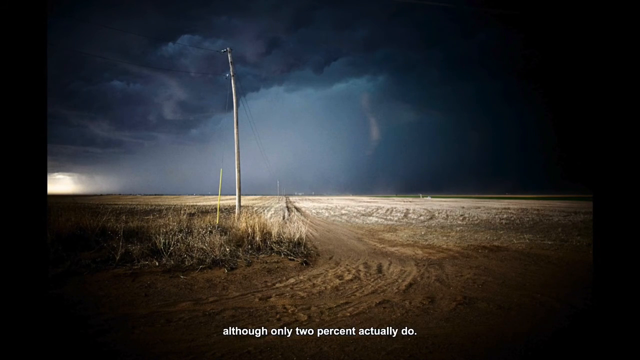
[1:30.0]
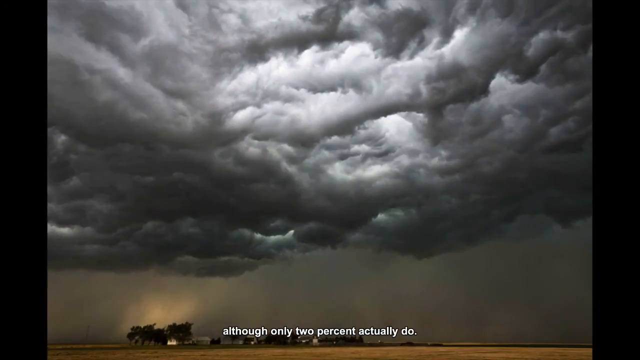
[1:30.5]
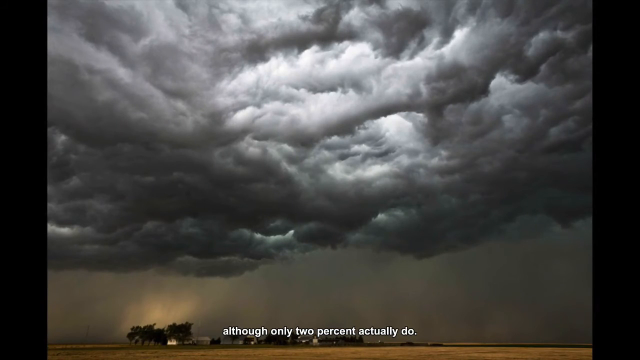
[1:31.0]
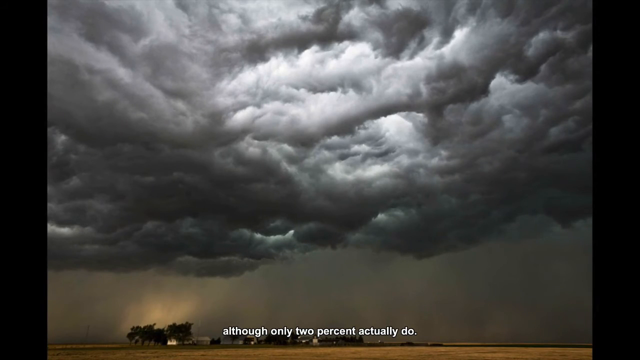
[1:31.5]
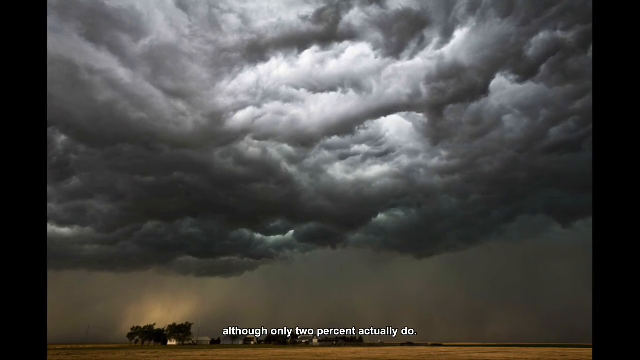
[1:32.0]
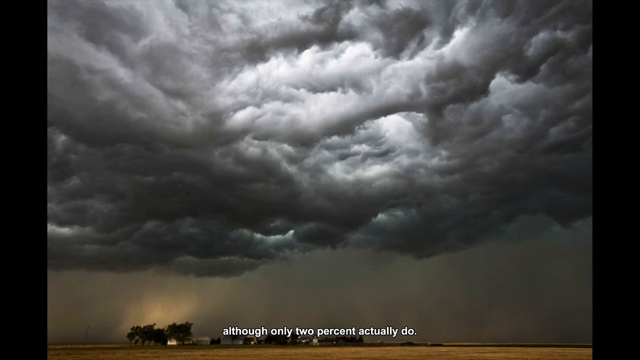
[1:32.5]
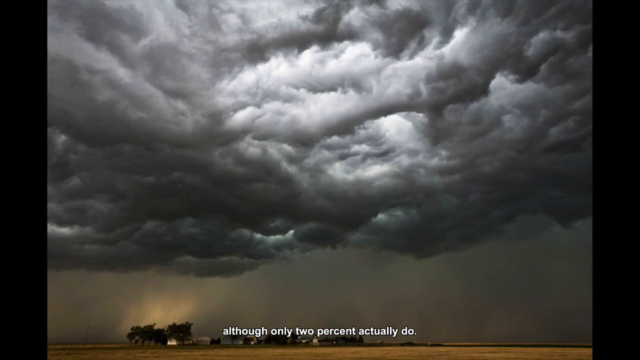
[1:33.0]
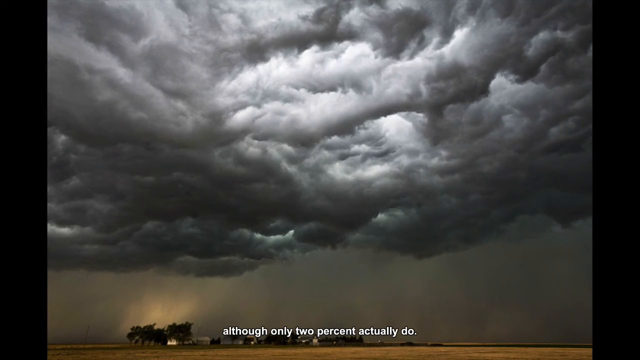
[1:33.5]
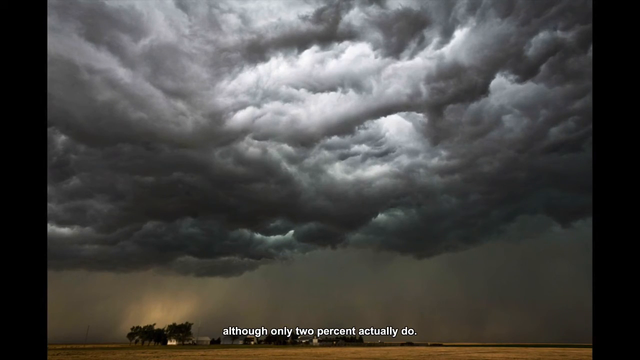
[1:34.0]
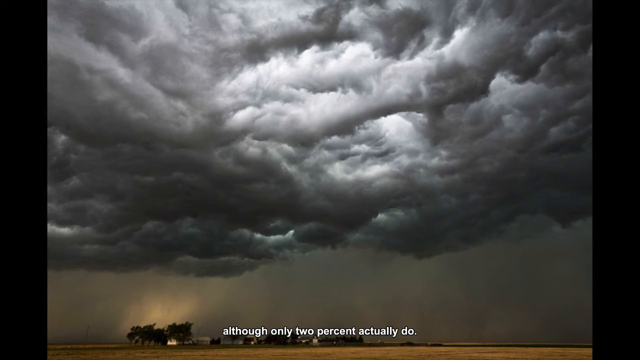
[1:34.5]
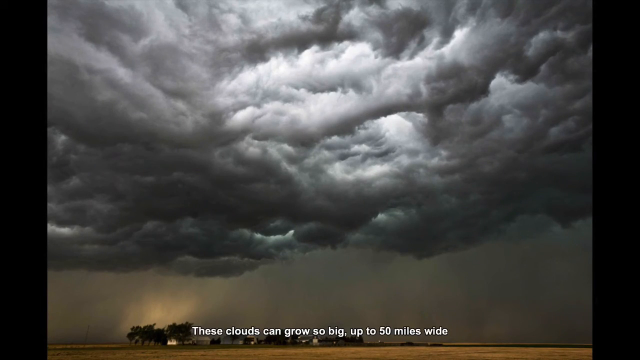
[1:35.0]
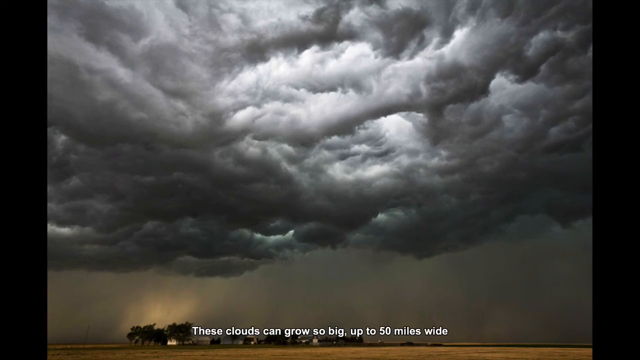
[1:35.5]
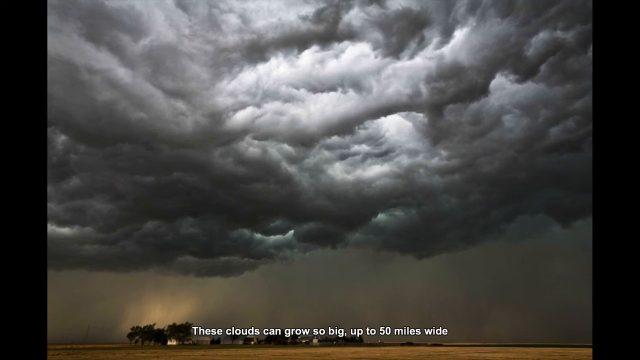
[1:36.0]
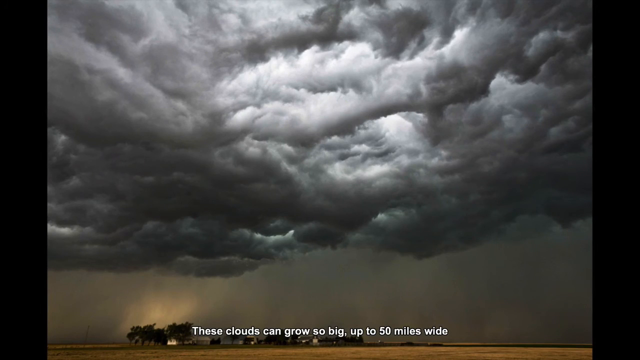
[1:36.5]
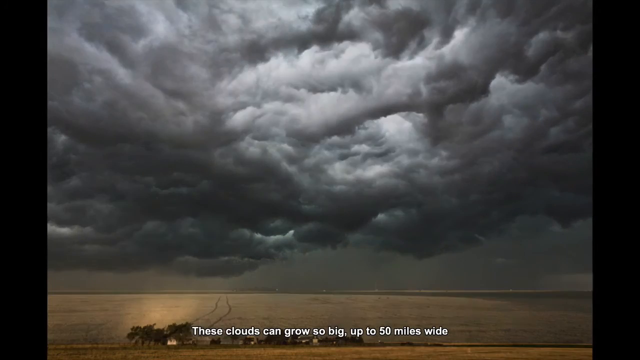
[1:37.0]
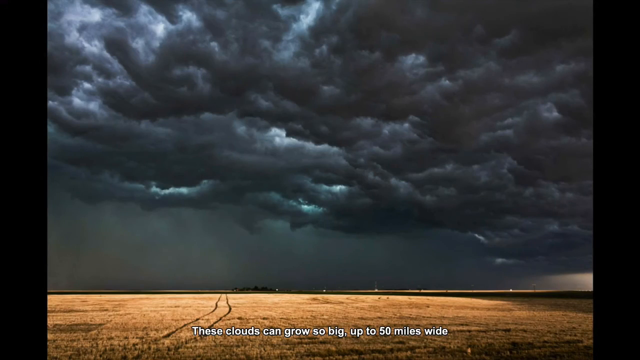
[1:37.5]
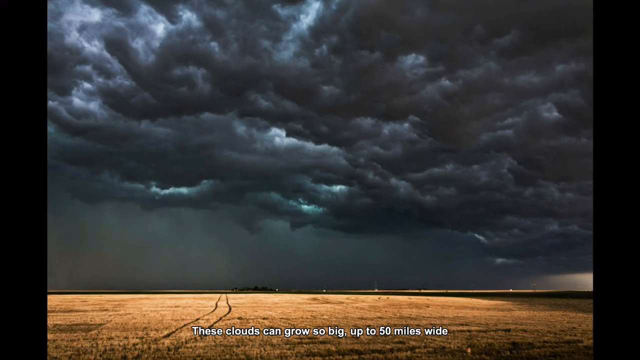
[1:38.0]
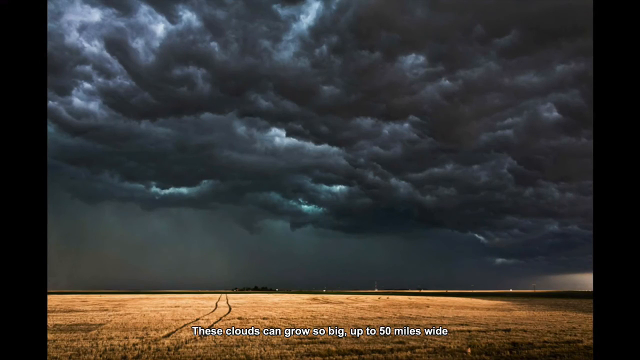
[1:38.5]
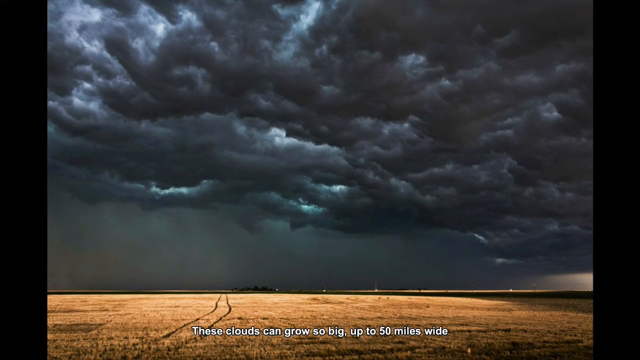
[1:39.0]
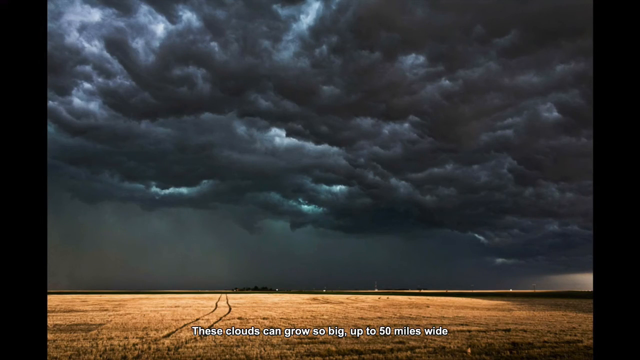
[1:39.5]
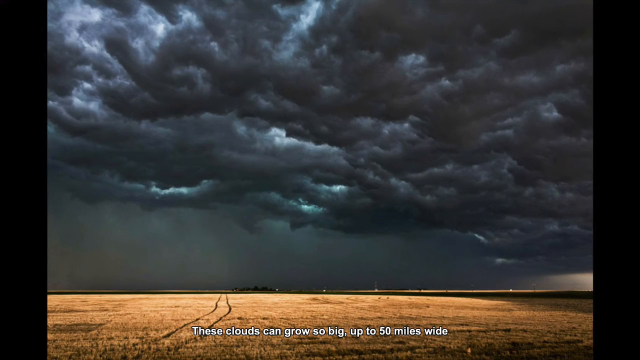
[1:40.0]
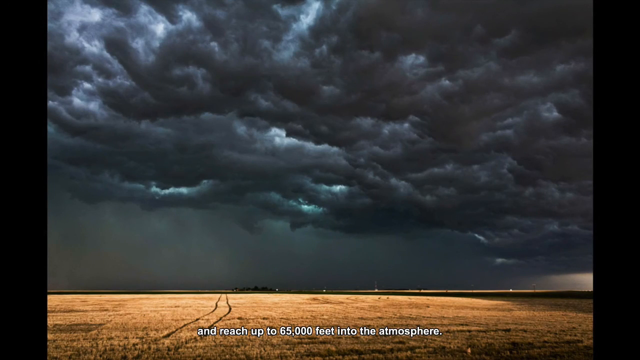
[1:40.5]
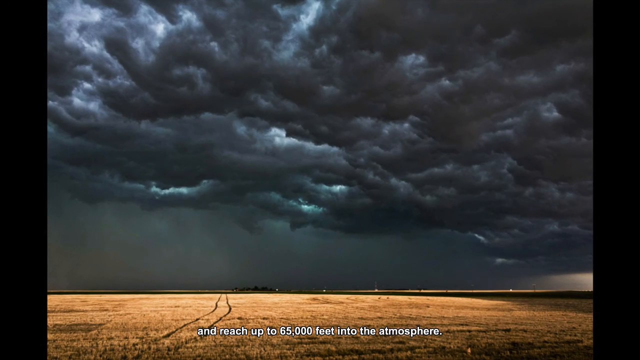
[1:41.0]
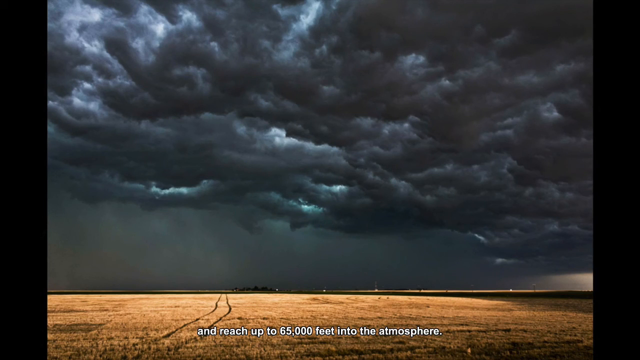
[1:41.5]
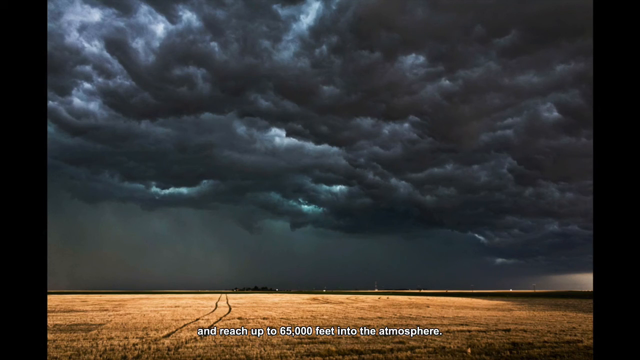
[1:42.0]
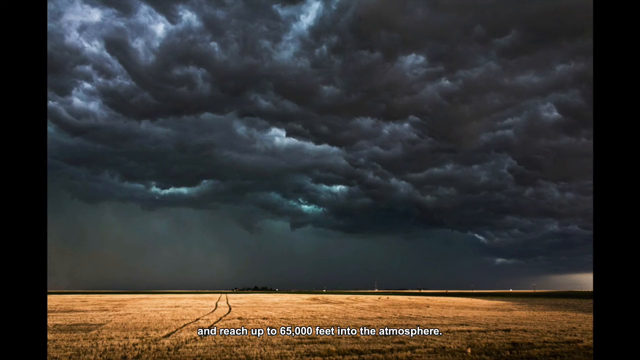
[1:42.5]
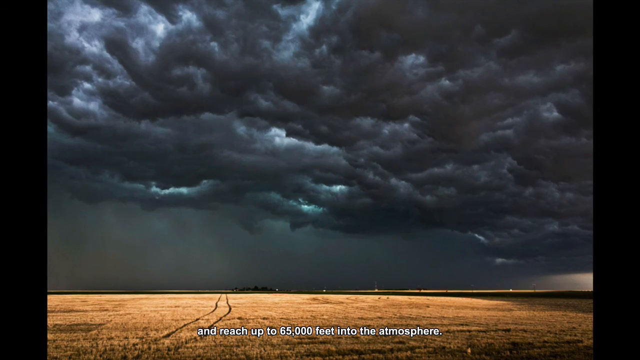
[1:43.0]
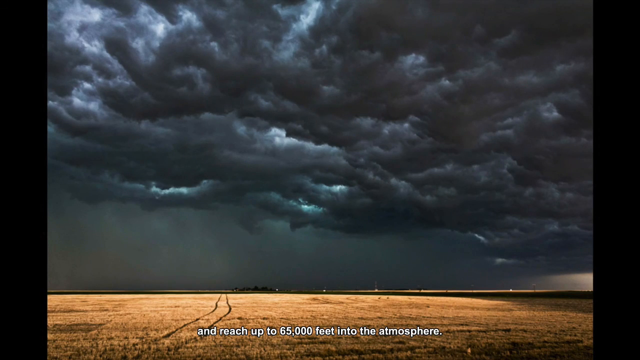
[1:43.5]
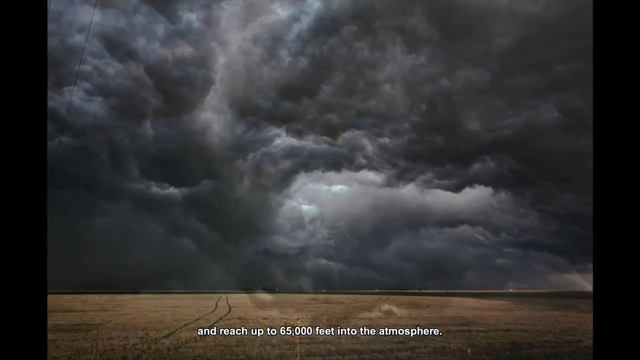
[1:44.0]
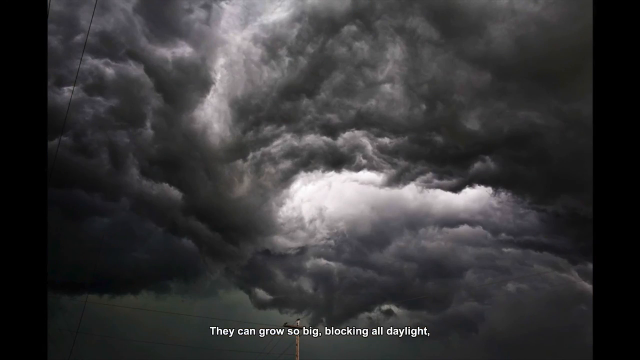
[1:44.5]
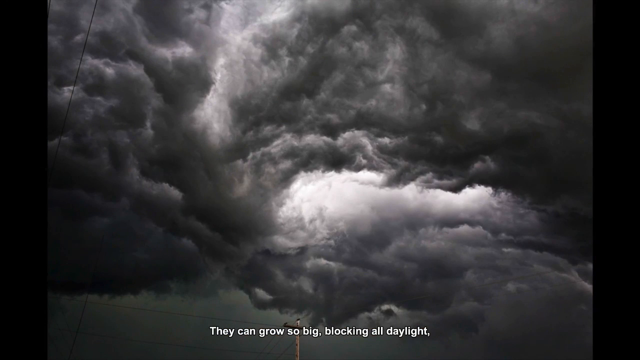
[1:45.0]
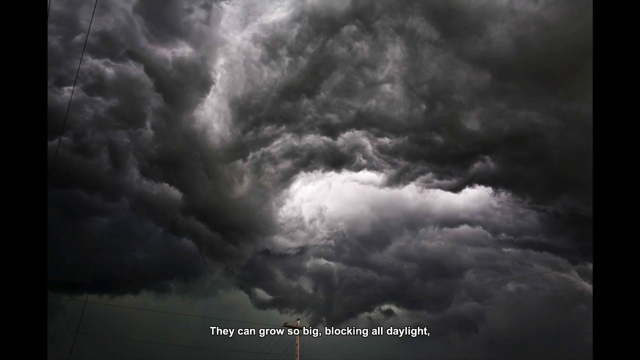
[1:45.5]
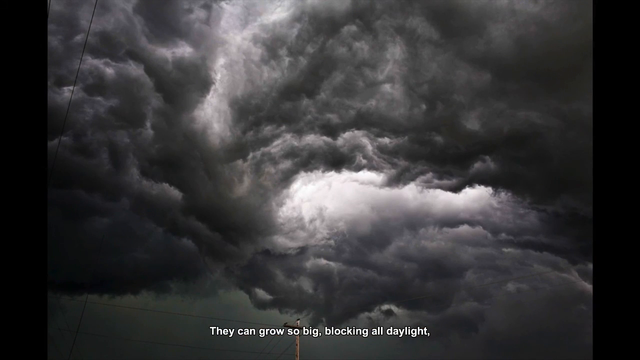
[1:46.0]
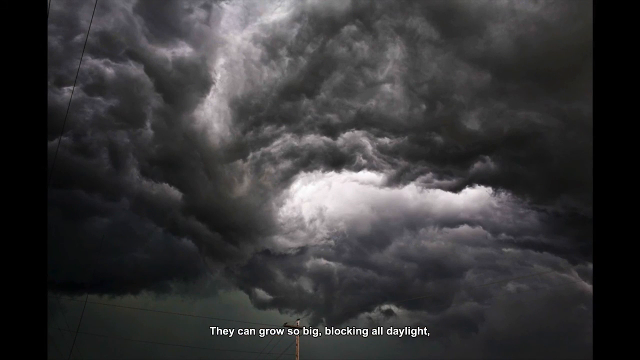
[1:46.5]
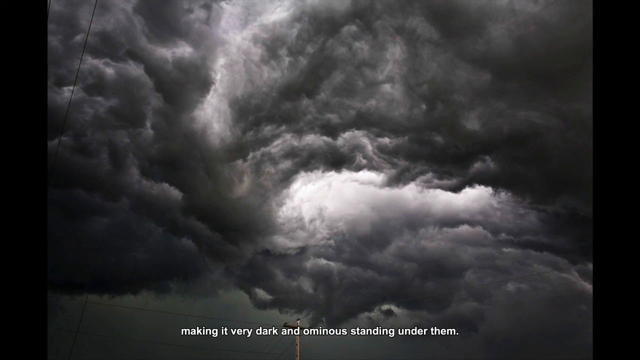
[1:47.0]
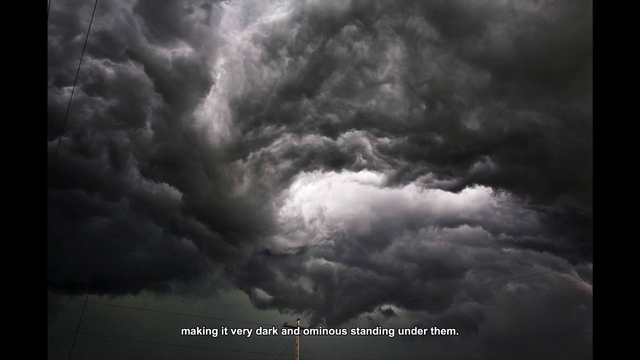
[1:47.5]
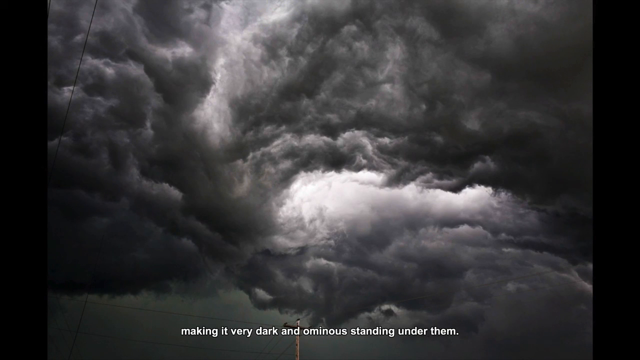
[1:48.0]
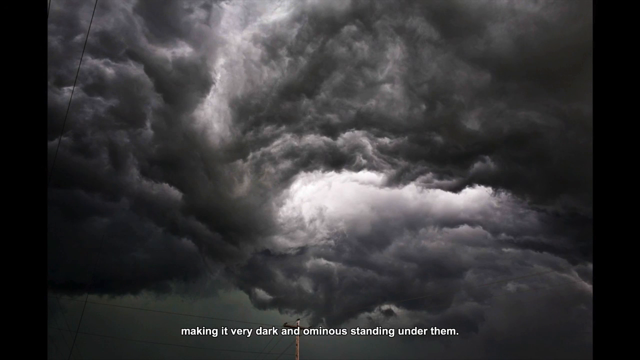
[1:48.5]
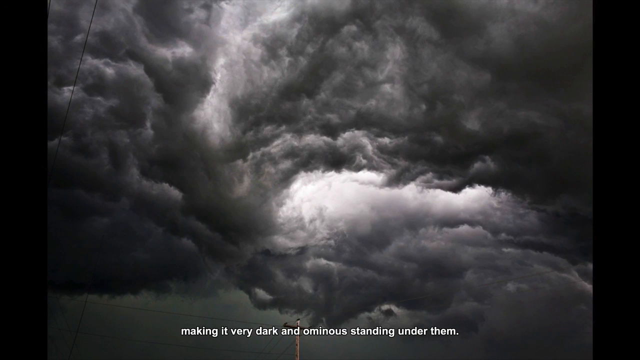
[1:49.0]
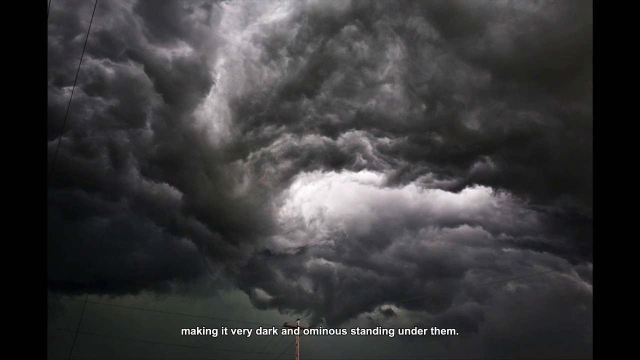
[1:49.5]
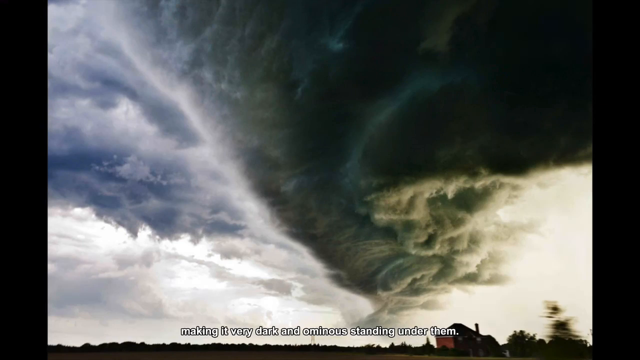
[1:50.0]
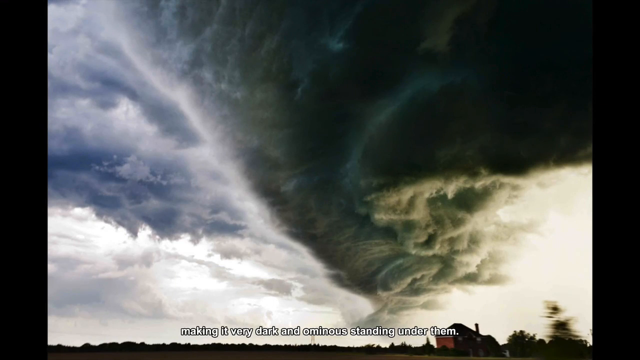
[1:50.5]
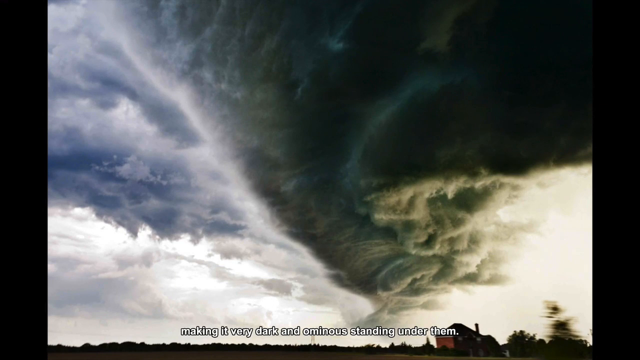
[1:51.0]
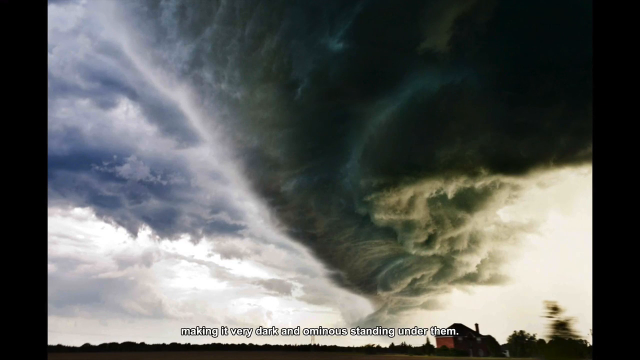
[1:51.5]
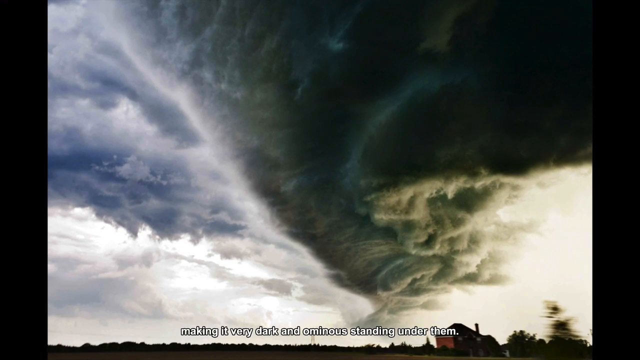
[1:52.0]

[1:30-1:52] An image shows more storm clouds with white light breaking through in the foreground and very light blue light breaking through in the background, with a dark silhouette of trees at the bottom. The picture changes to more storm clouds, with white light breaking through in the foreground and blue light in the background, above fields of dead grass with tire tracks running through them. Text at the bottom of the shot reads "these clouds can grow so big up to 50 miles wide." The image changes to a new photo of storm clouds with white light breaking through, the tops of power lines showing at the bottom of the image, and text at the bottom reading "they can grow so big blocking all daylight making it very dark and ominous standing under them."